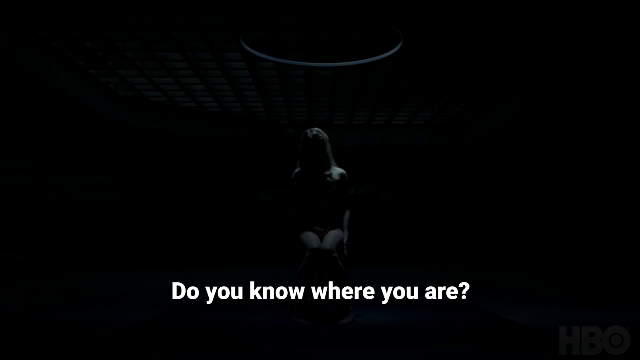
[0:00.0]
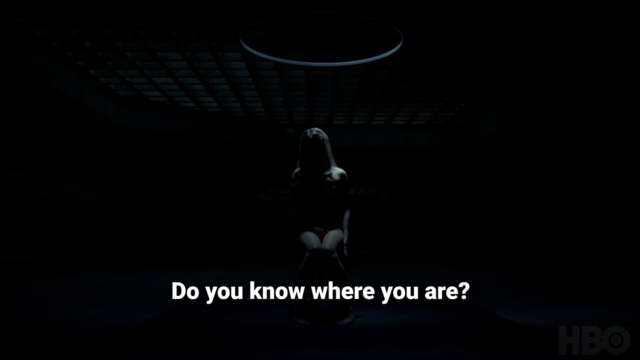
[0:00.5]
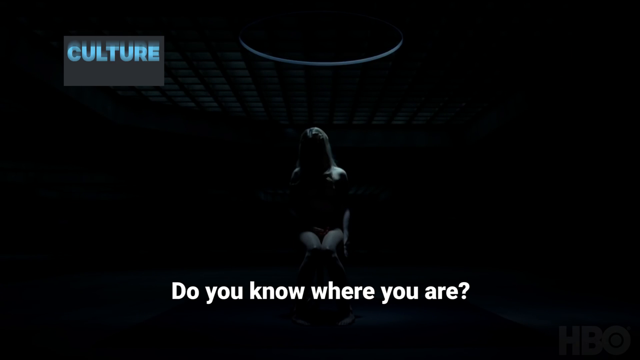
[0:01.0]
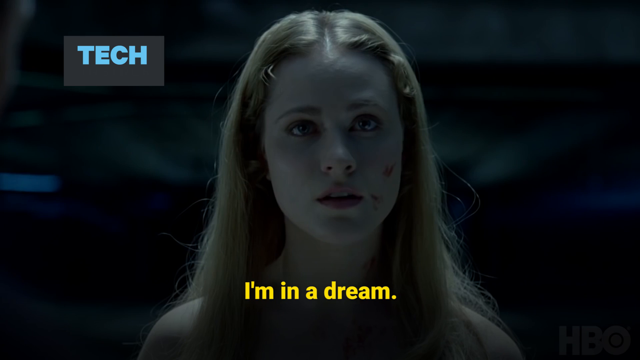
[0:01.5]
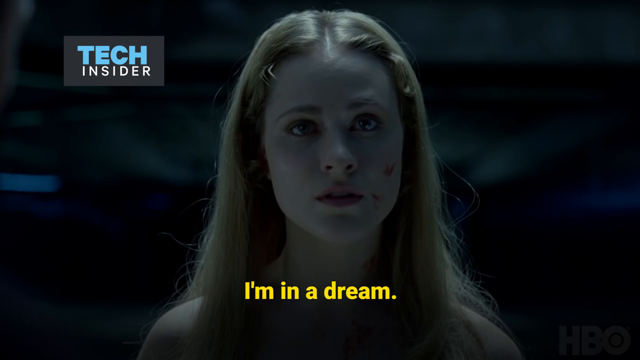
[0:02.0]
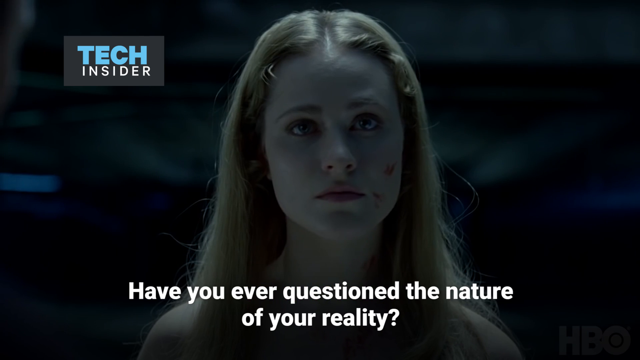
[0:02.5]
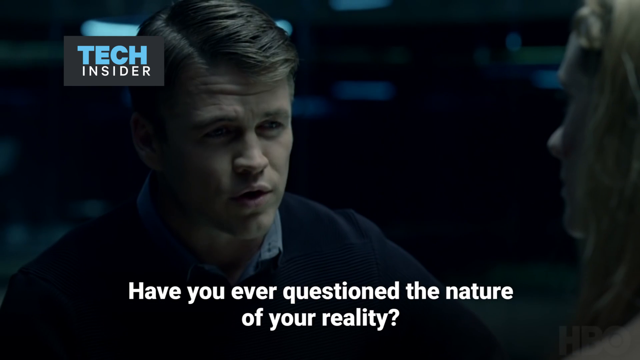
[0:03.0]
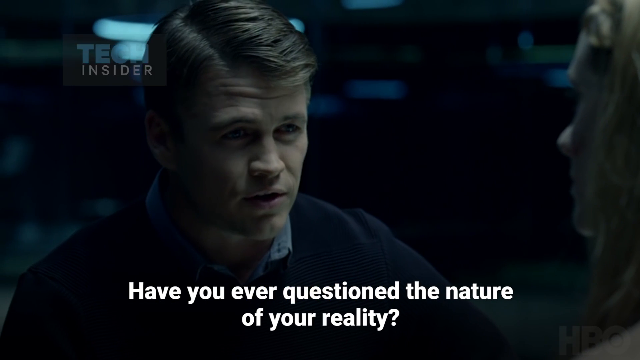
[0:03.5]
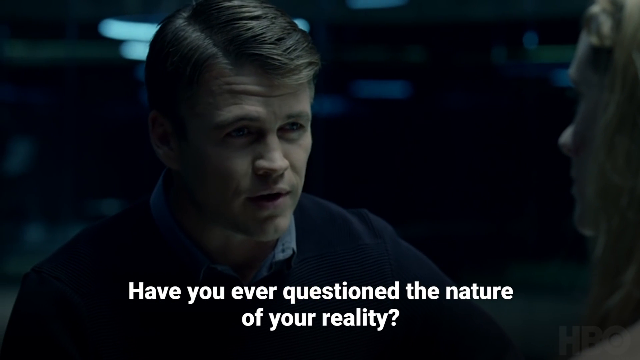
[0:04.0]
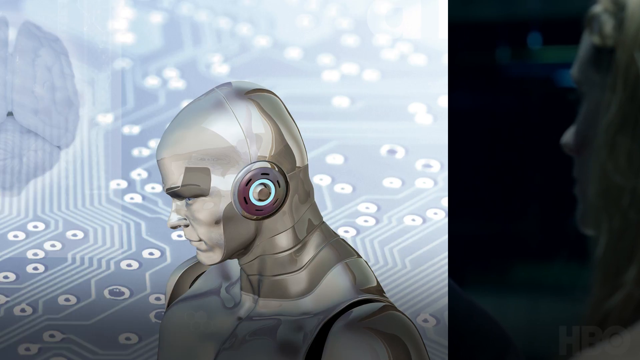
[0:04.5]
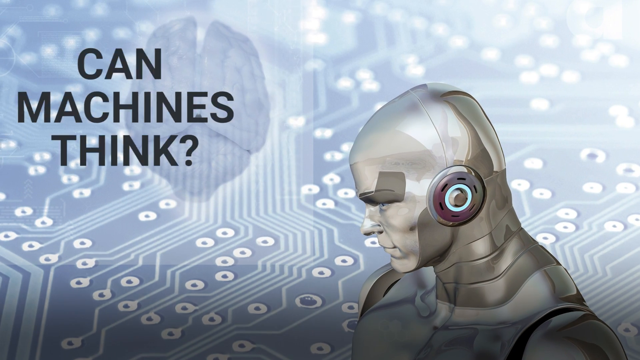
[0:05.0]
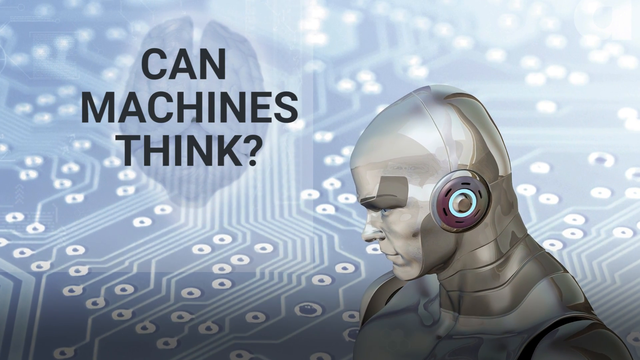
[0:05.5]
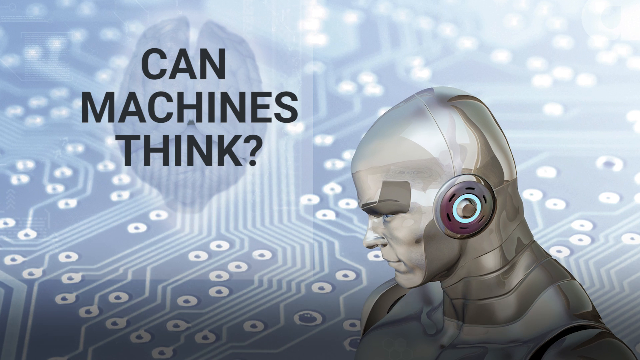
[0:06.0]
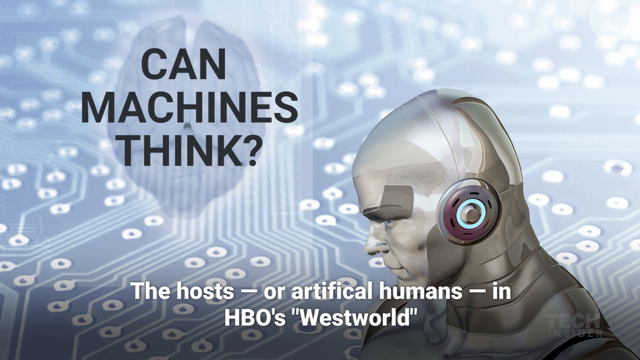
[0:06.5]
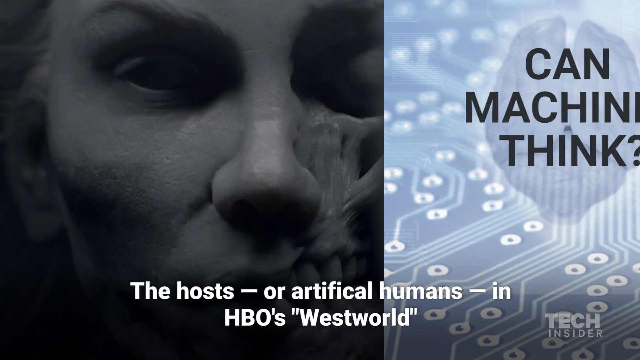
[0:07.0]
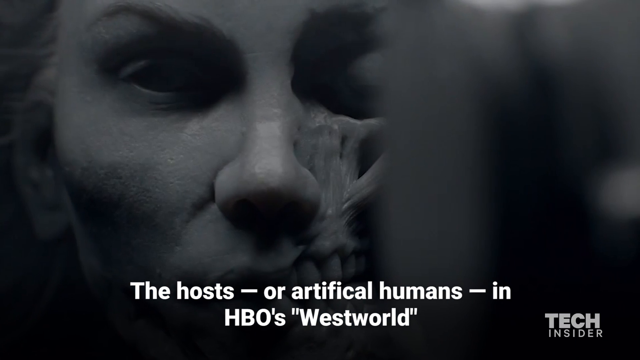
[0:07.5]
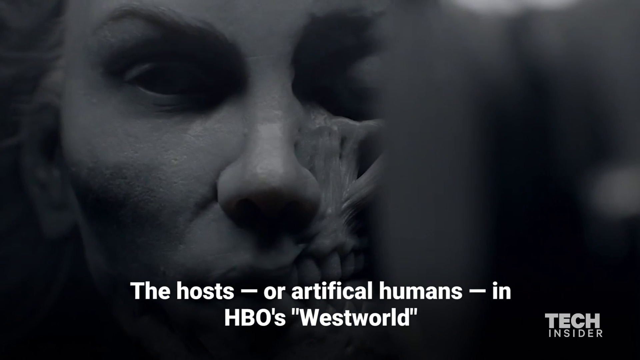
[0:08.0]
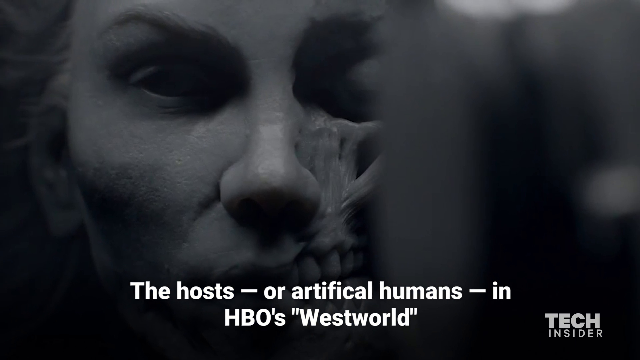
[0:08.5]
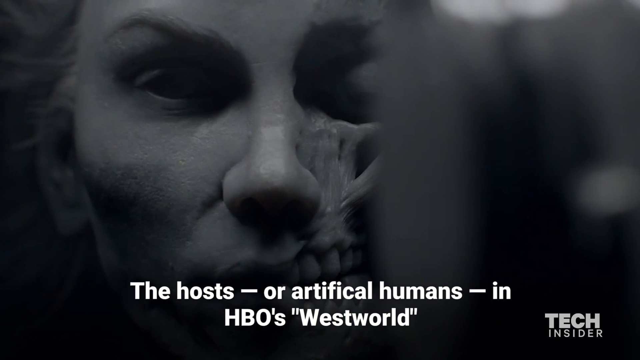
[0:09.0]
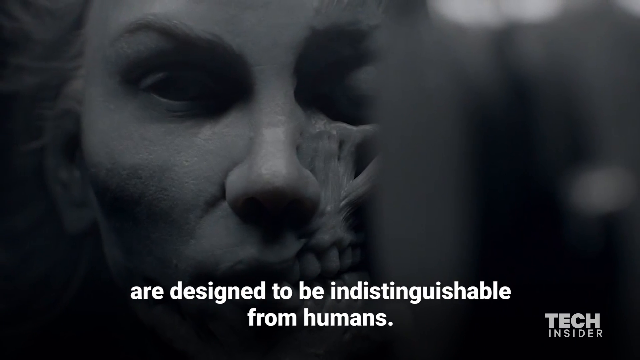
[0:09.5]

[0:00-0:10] In a dark room, the faint form of a woman is visible. There is a hole in the ceiling, and the room is almost completely dark, with a slight grid pattern on the ceiling. A subtitle at the bottom reads "do you know where you are". The scene becomes slightly lighter, and a rectangle comes in from the top at the upper left-hand corner containing the word "innovation", and then "tech insider" appears in the box. The shot moves to a close-up of the woman's face; she has a slight smear of blood on her left cheek and her hair is parted in the middle. She says "I'm in a dream," and the yellow subtitle reads "I'm in a dream". The shot then focuses on a man with a side part and brown hair, Caucasian, in his late 30s or early 40s, wearing a dark blue sweater over a light blue shirt. He is on the left, looking at the woman, whose face is in profile on the right. The subtitle says "Have you ever questioned the nature of your reality?" A slide moves in from the left: a light blue circuit board with a bald cyborg in the bottom right-hand corner looking to the left and downward, and a slight silhouette of a brain in the upper left, overlaid with "CAN MACHINES THINK?" in black text. The view zooms in on the whole slide, and the subtitle says "the hosts or artificial humans in HBO's Westworld". That slide moves to the right, revealing a face with dark pits for eyes; the left side of the face is like a skinless skull and the right side is a normal human face with skin, and the view zooms out slowly. It then cuts to the same woman in the background, seen from the point of view of a window. A blurred object is in the absolute foreground, a light brown horse with a leather bag on it is in the middle ground, and the woman is behind it.